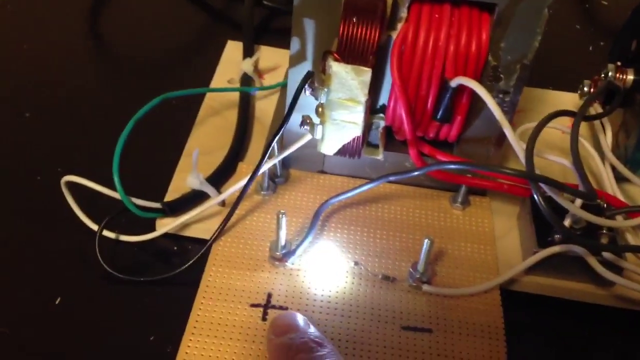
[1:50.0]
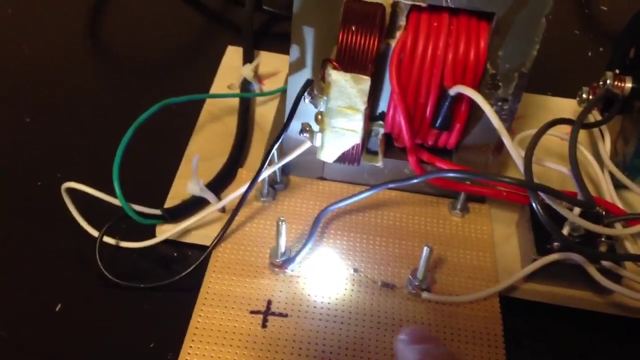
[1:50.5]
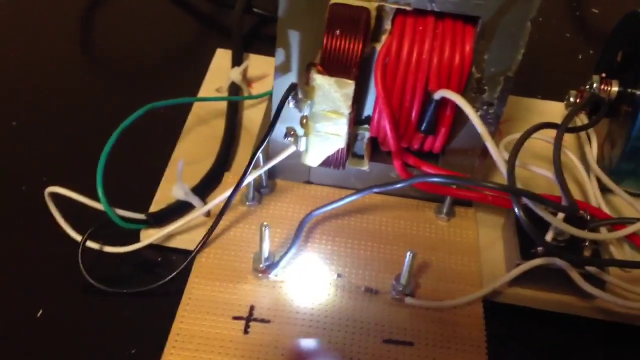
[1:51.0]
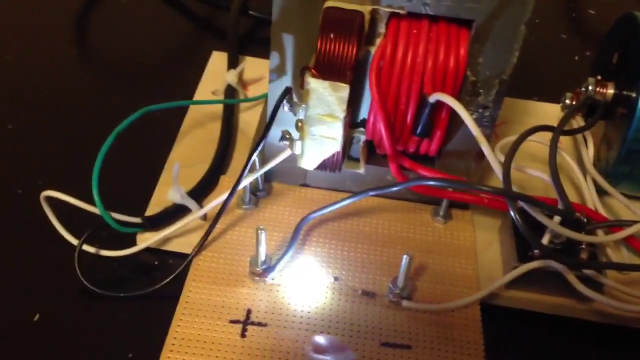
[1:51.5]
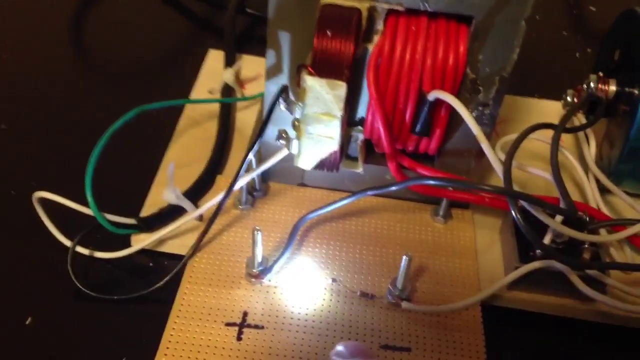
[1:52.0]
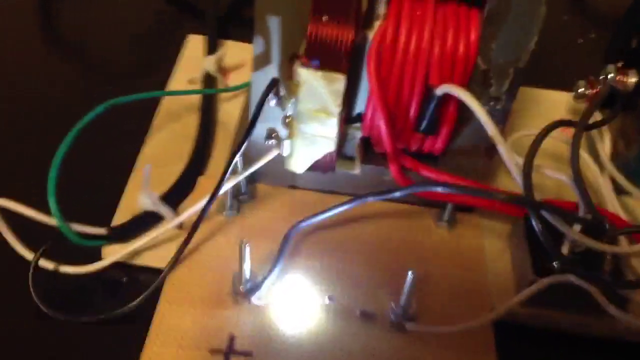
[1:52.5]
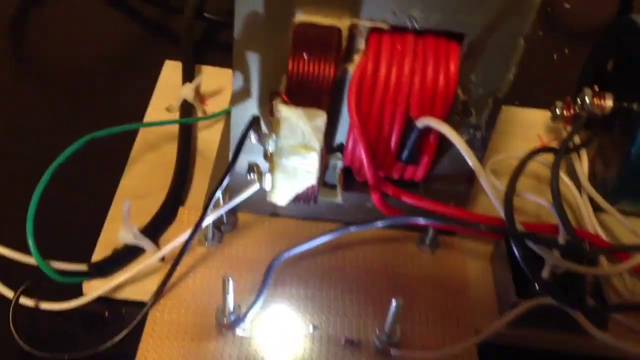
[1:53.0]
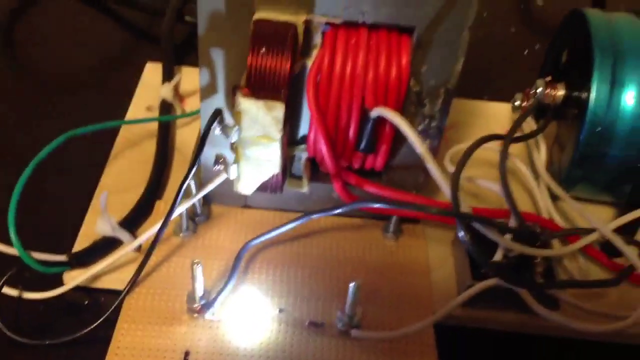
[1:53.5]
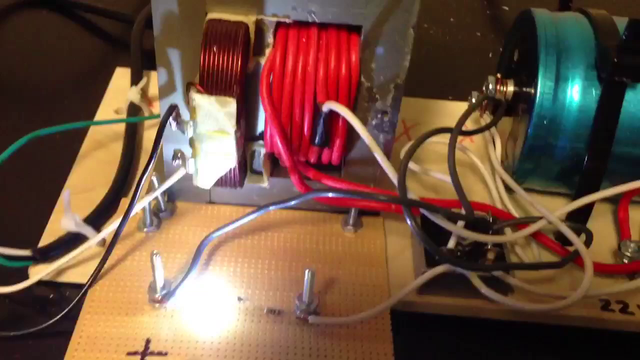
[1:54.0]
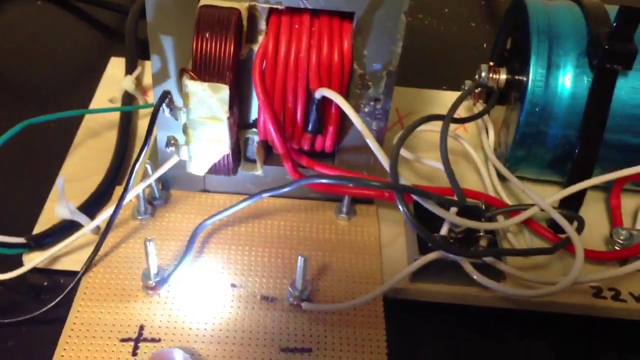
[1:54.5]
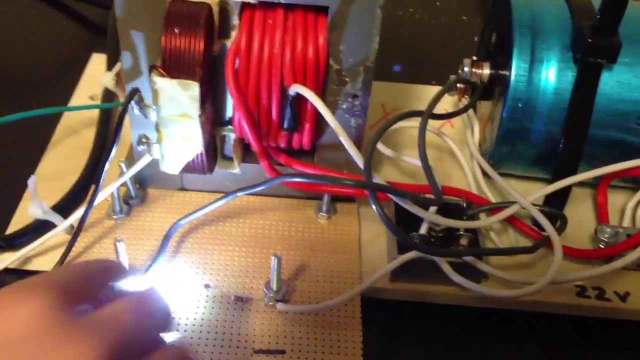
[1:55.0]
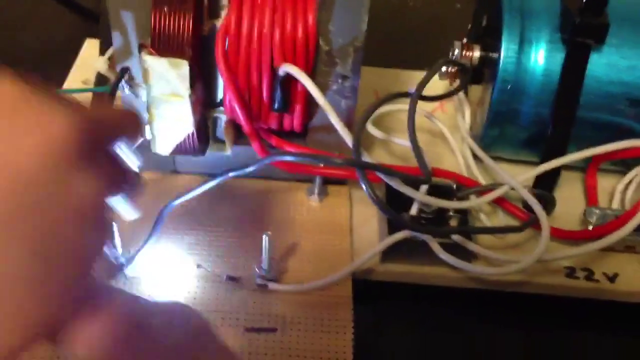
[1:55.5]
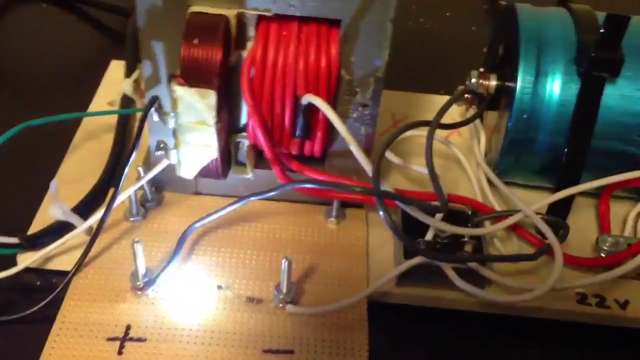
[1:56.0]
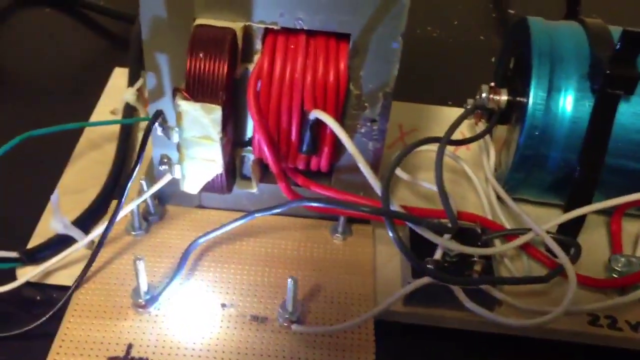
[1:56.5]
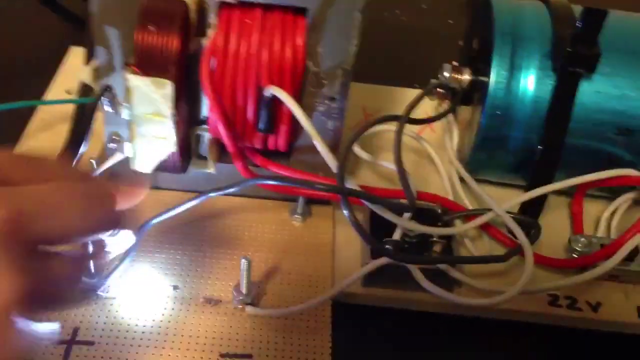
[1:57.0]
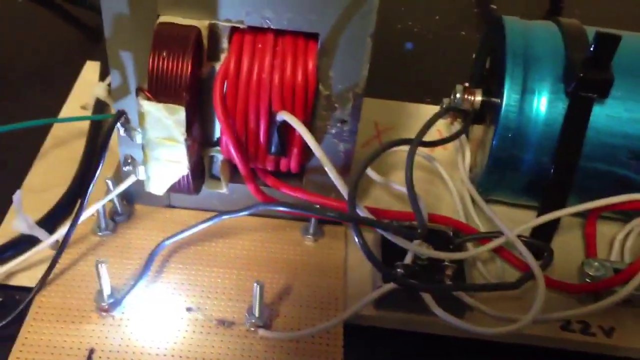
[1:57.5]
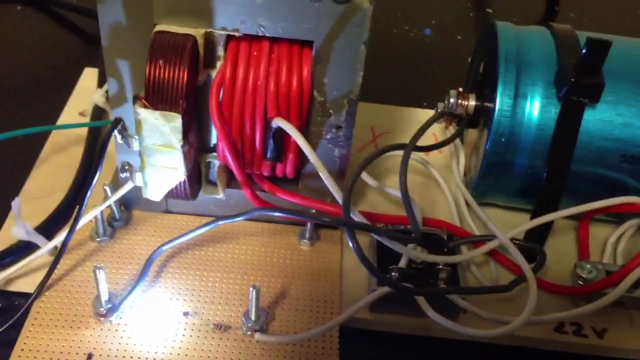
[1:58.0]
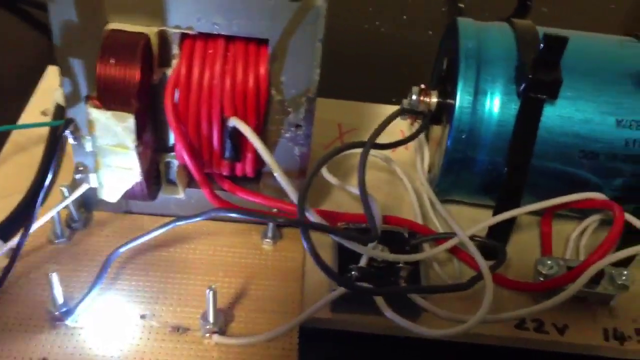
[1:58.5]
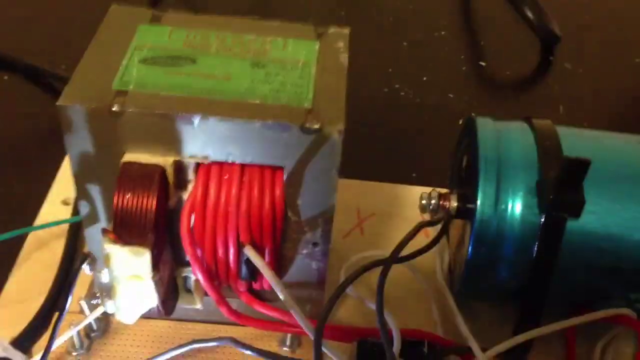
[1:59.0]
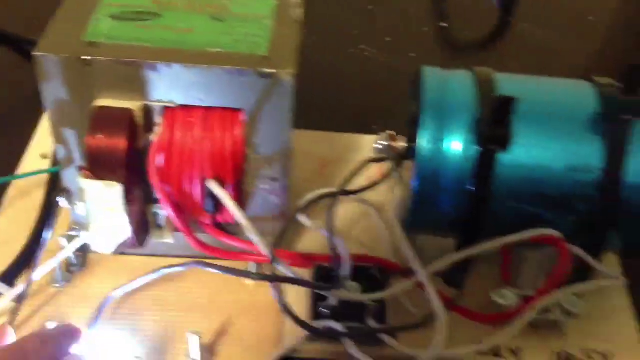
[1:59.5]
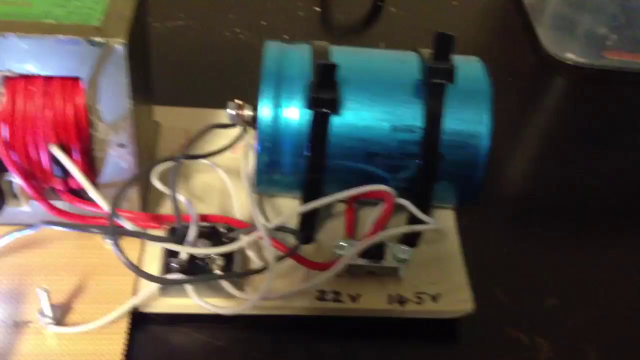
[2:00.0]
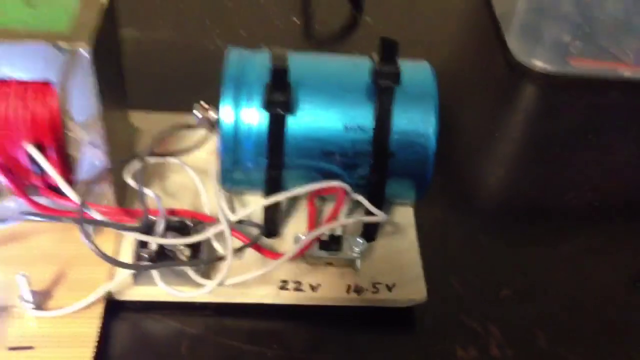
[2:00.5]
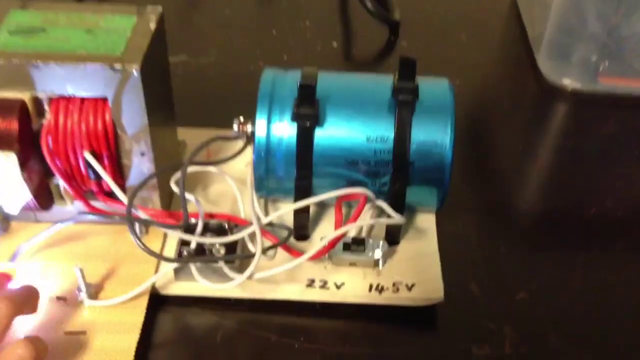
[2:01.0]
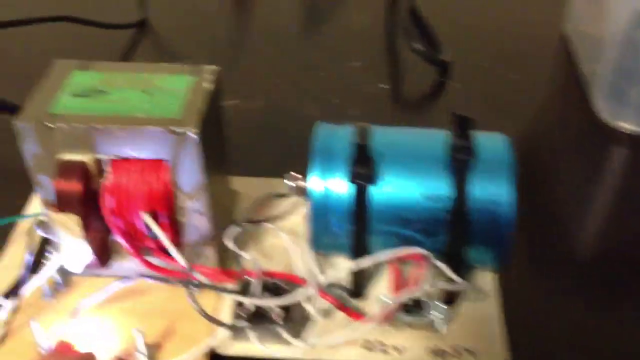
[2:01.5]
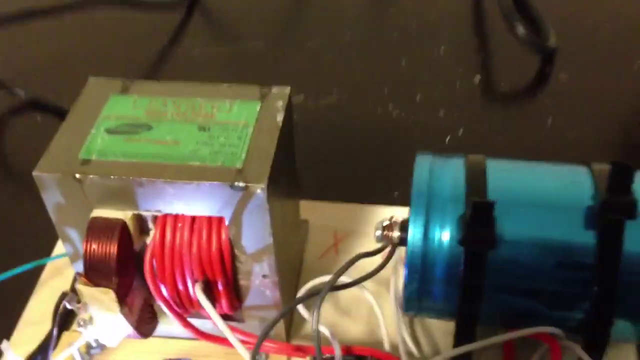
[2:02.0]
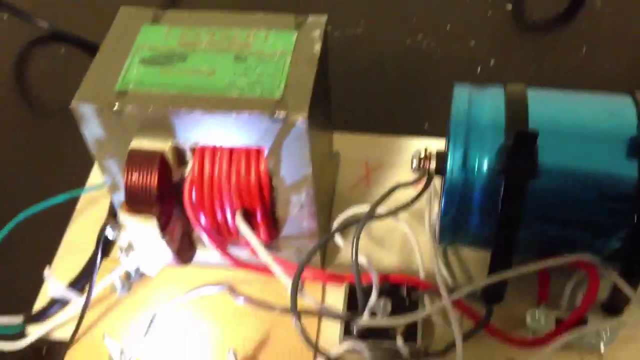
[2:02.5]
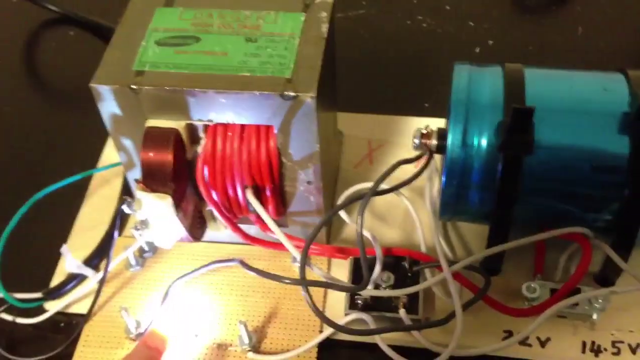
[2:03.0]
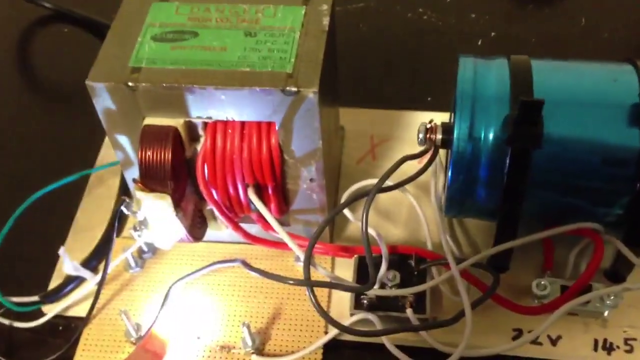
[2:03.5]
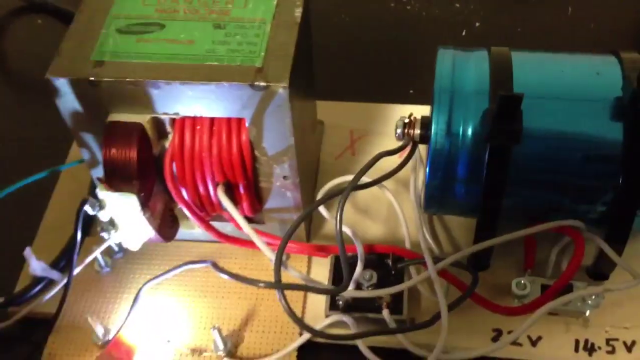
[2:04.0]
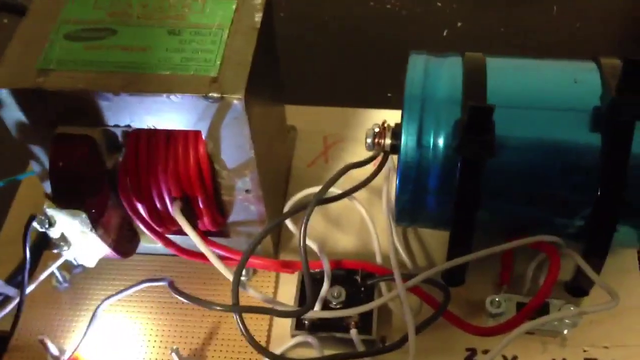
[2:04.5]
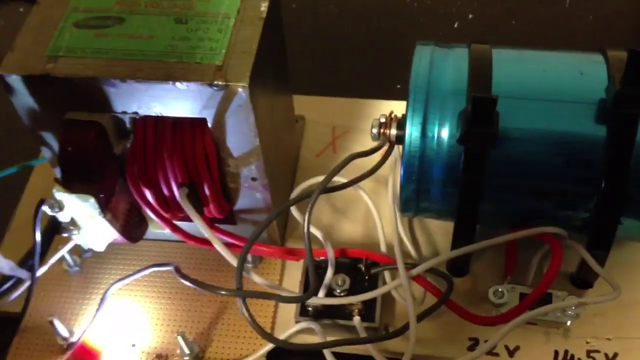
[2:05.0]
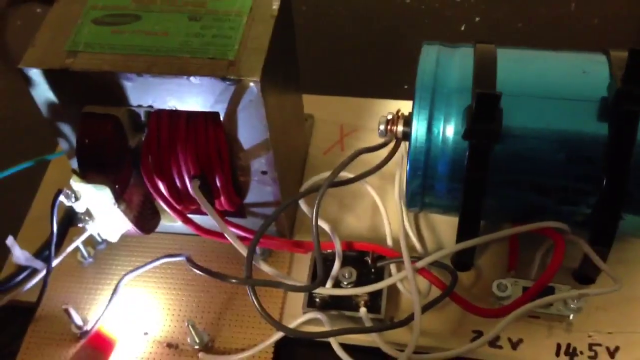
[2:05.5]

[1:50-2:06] The camera focuses on the area with the one light and the wires coming out from the pegs, then wobbles slightly over the area with the metal block. A left hand comes in from the bottom left, briefly moves toward the light, then moves up and to the left out of frame; it comes back from the left very briefly and goes out again. The camera moves back up to the top view of the metal brick and the metal cylinder, and the video ends. To the left of the metal brick with the red wires is another green wire that had been out of frame until now. There is what looks like a red X on the board between the two metal objects, and the desk they are on is somewhat dirty.